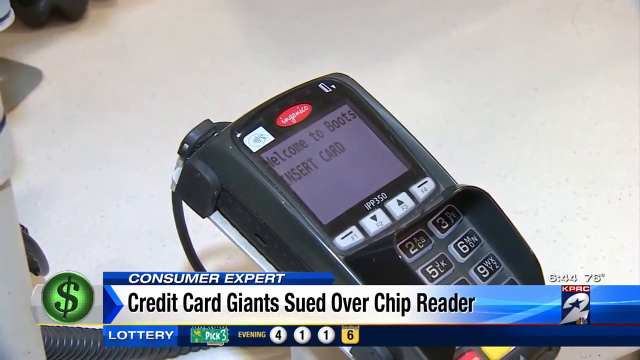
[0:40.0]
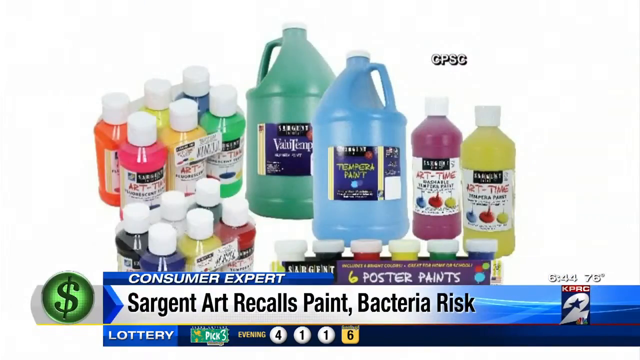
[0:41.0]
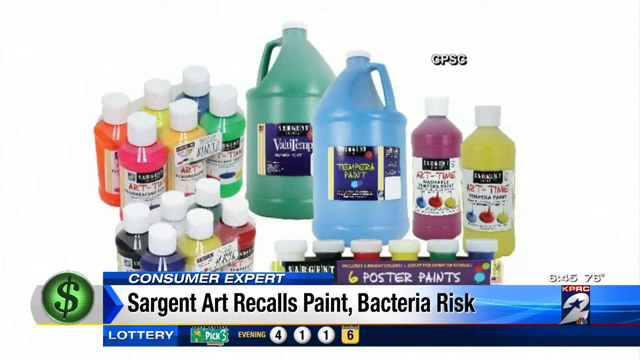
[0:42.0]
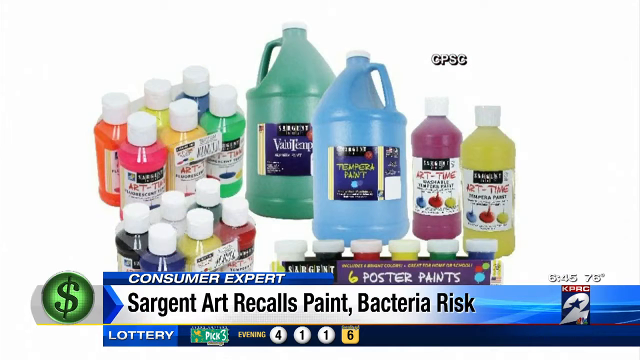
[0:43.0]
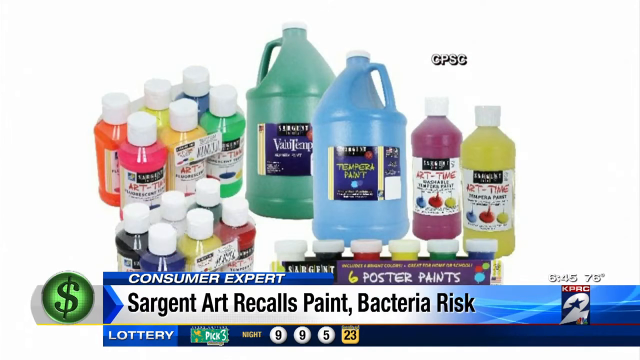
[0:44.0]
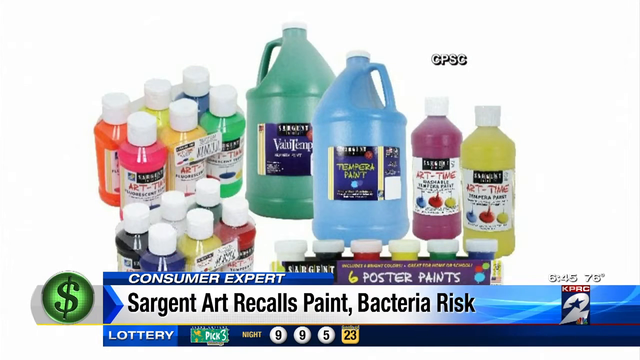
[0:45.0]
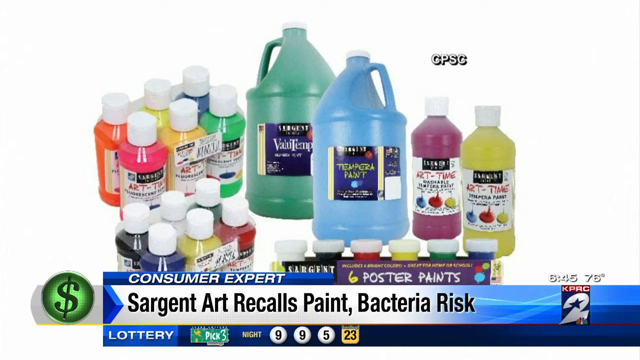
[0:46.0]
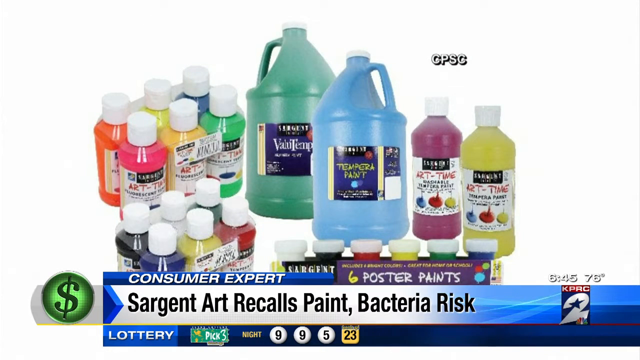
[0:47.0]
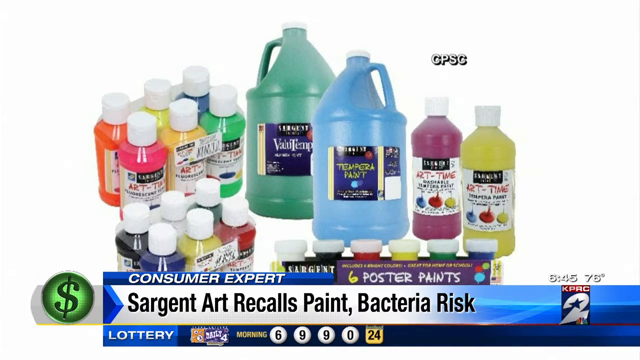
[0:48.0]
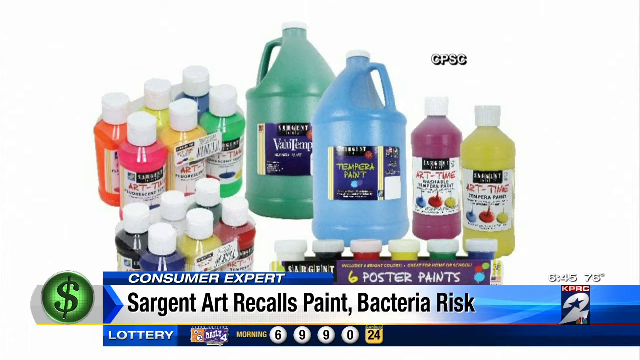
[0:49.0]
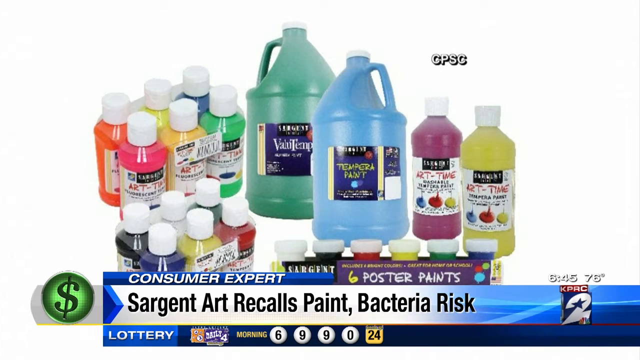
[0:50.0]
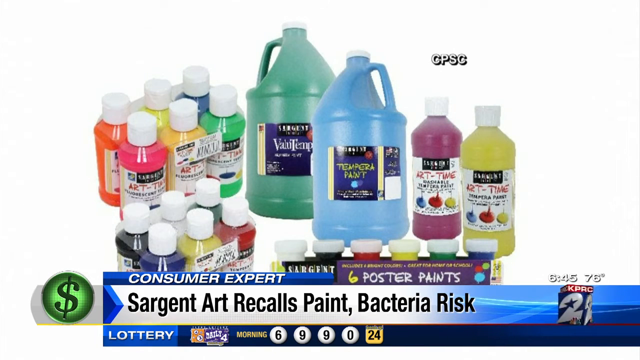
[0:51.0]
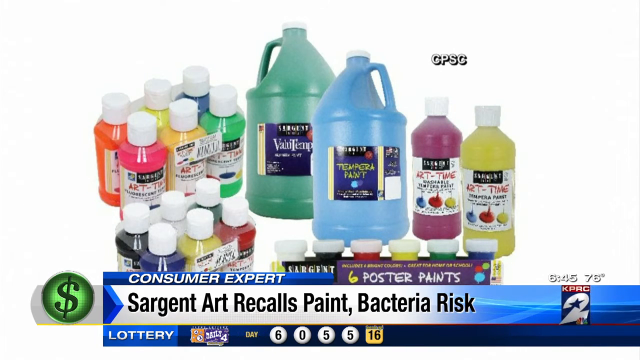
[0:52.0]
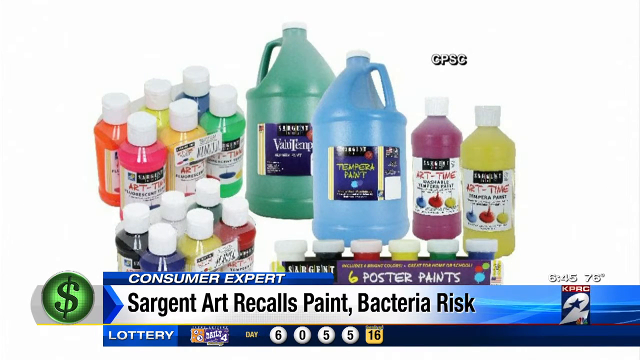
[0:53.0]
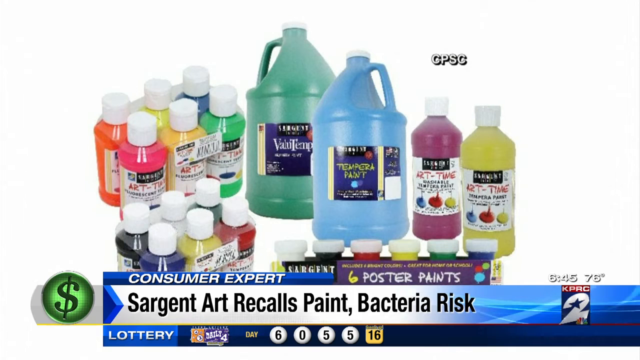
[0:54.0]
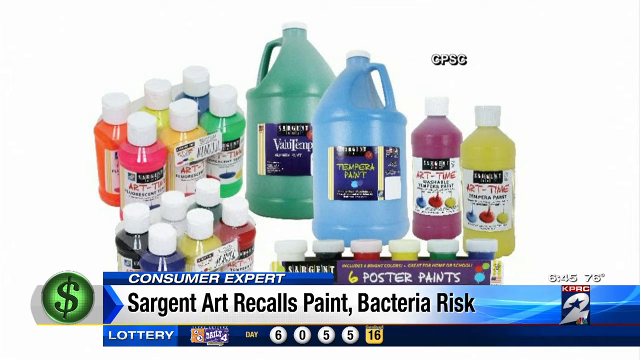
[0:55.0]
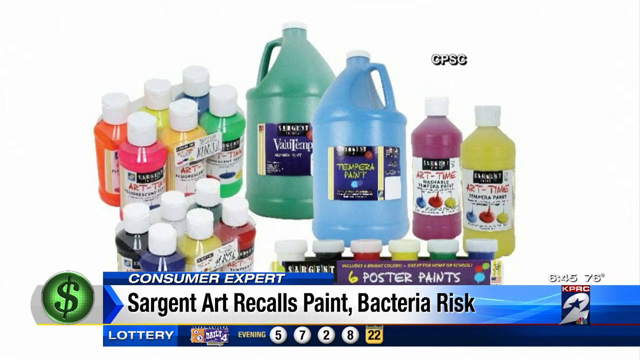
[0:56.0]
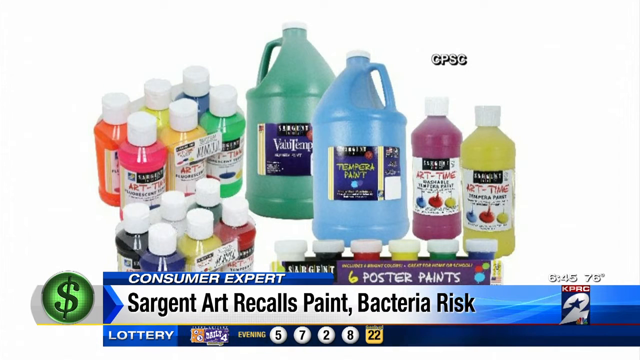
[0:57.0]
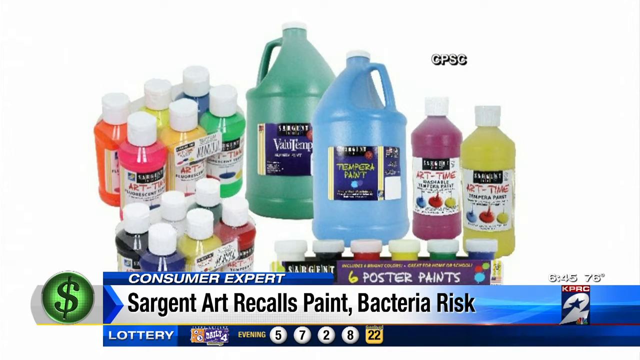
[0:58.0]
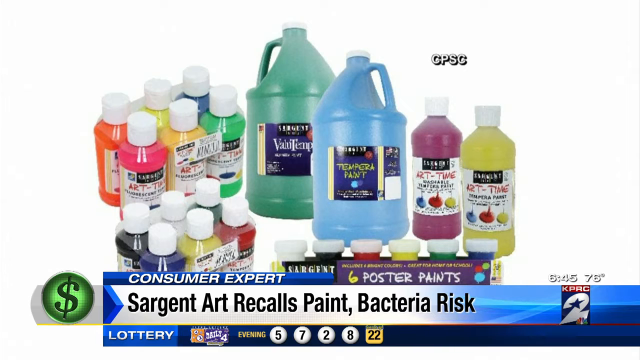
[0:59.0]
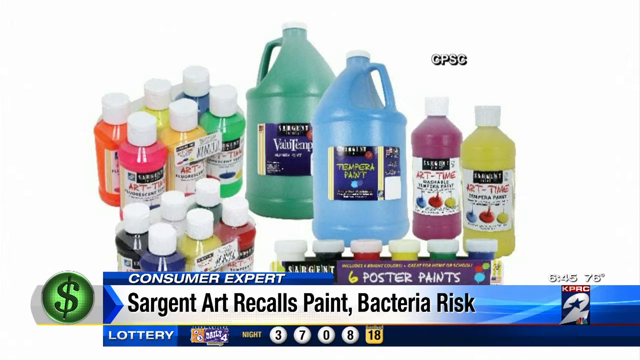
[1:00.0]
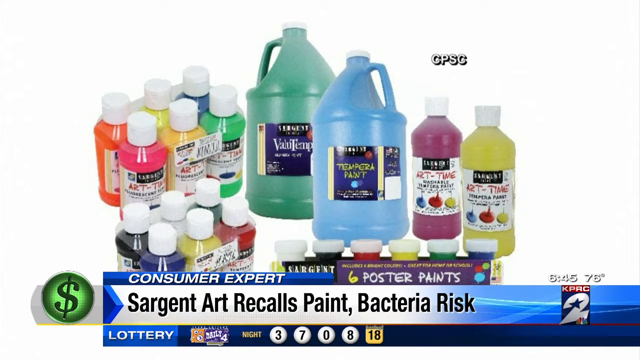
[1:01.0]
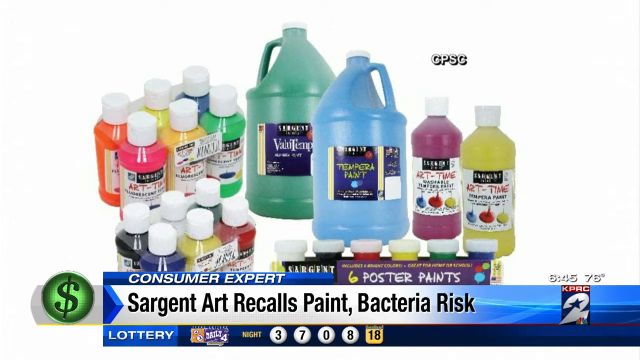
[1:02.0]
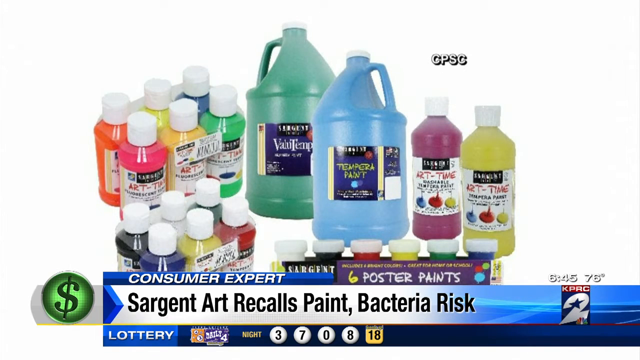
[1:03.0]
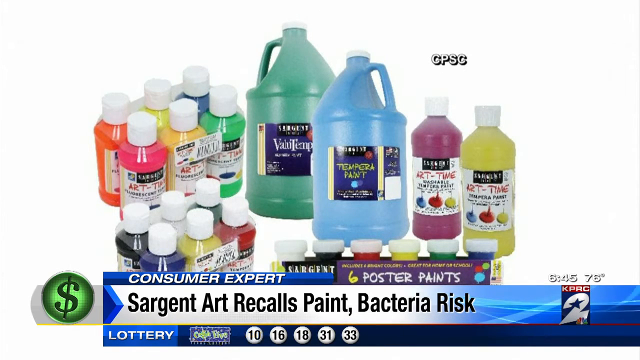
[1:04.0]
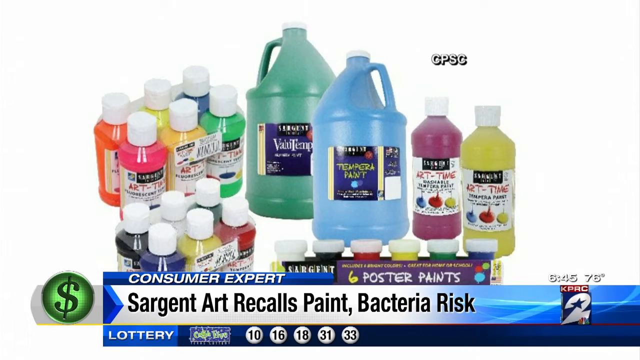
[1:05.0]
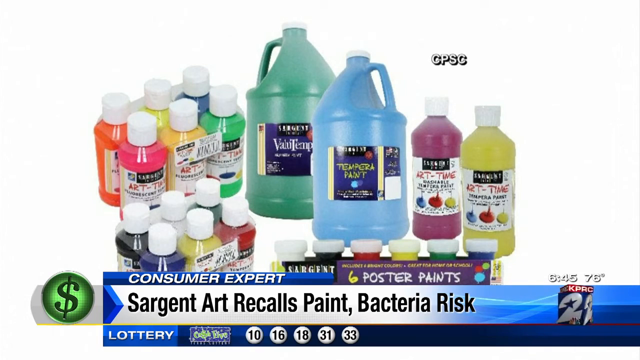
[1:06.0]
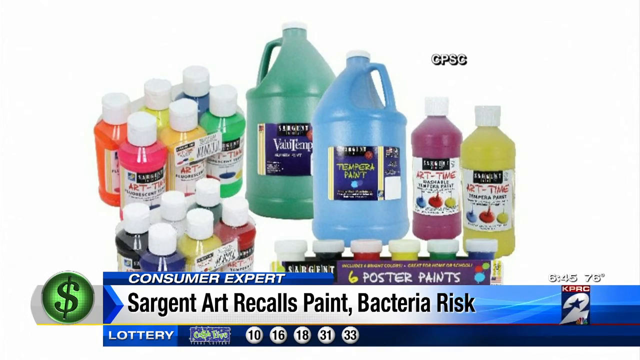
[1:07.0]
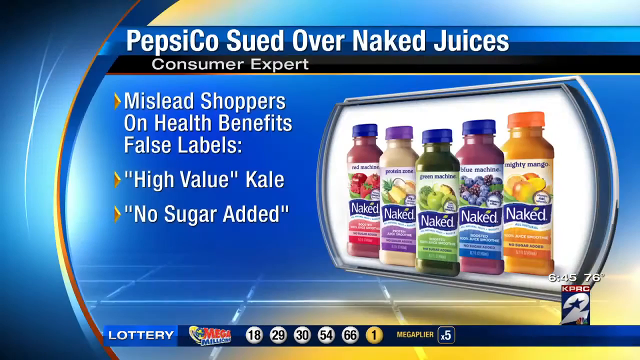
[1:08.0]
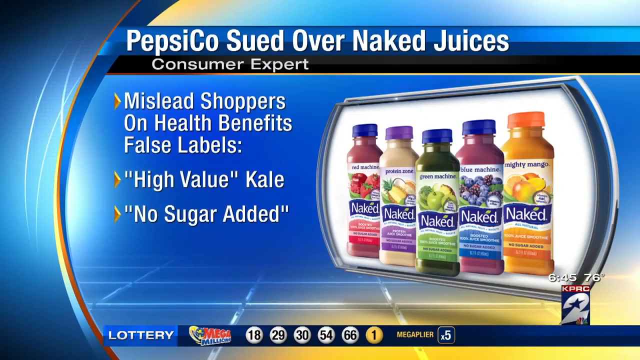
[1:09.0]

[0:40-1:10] The speed point shows the transaction approved and is ready for another transaction. The view then switches to another headline that reads "Sgt Art recalls paint bacterial risk," with text that also says "six poster paints." Behind the text are paints in small containers in different colours: pink, blue, green, yellow, black and others. Another headline reads "Pepsi sued over naked juices, consumer expert." Pictures of six Naked juices in different flavours appear on the right, and text on the left reads "mislead shoppers on health benefits, false label, high value, kale, no sugar, added." Lottery numbers are displayed along the bottom of the screen: 18, 29, 30, 54, 66 and 1.